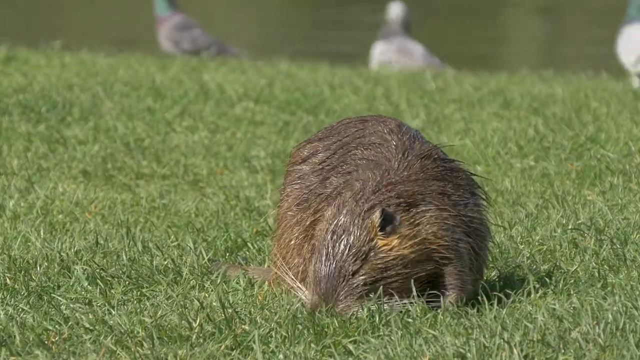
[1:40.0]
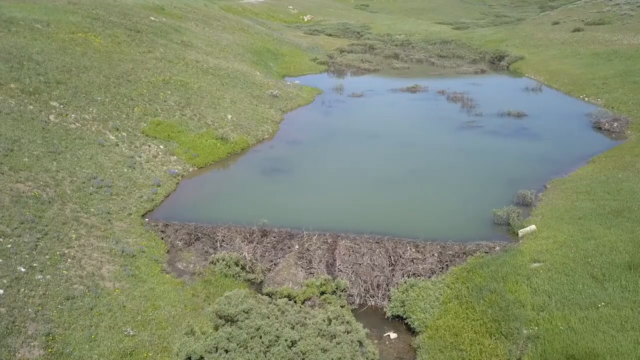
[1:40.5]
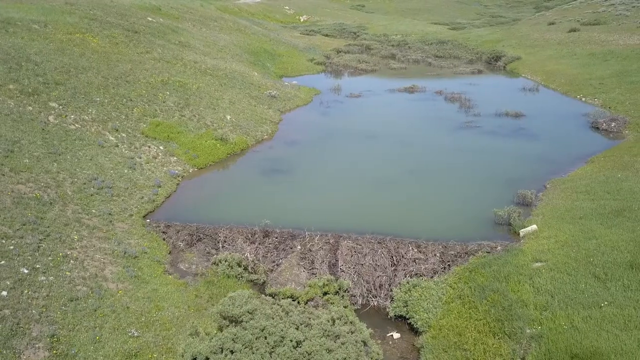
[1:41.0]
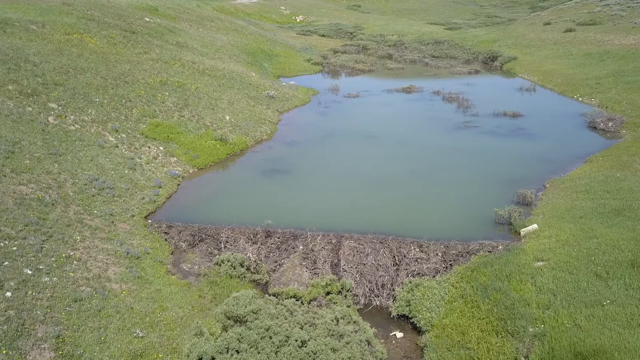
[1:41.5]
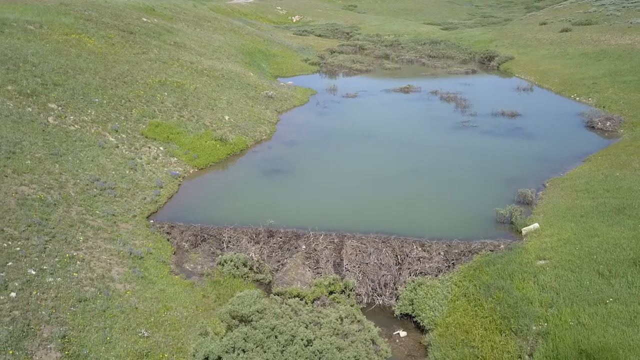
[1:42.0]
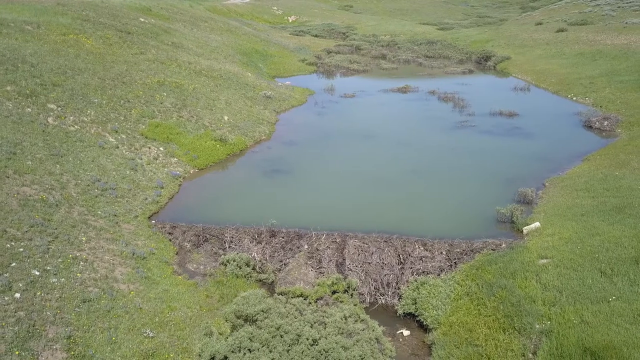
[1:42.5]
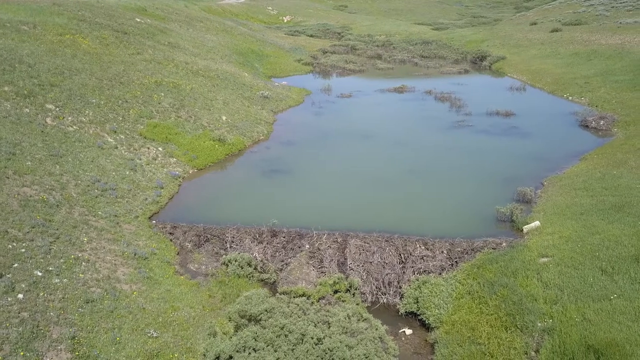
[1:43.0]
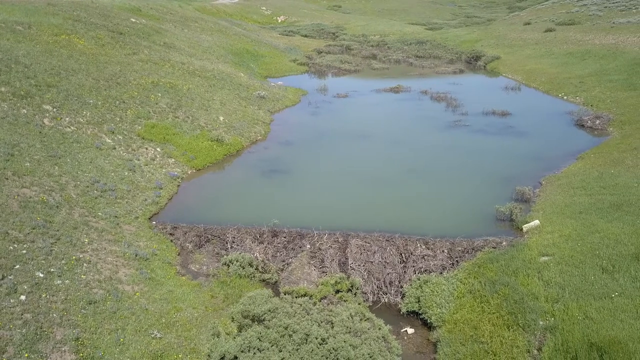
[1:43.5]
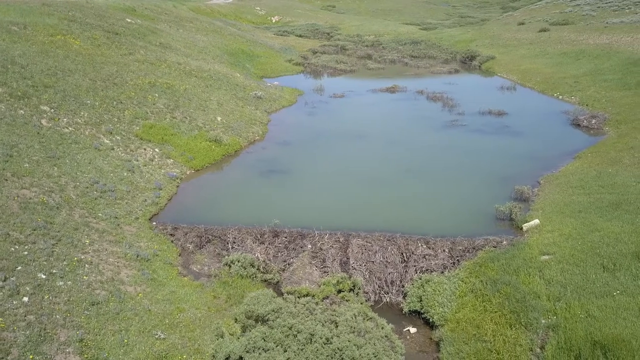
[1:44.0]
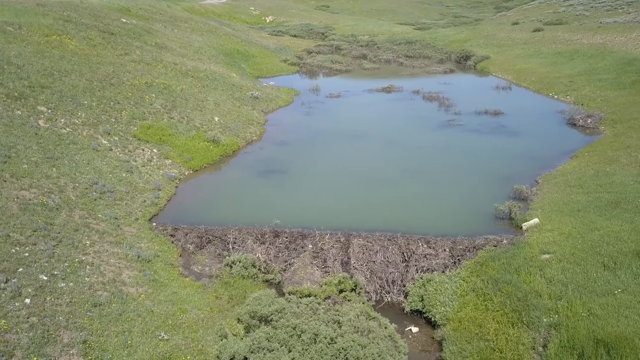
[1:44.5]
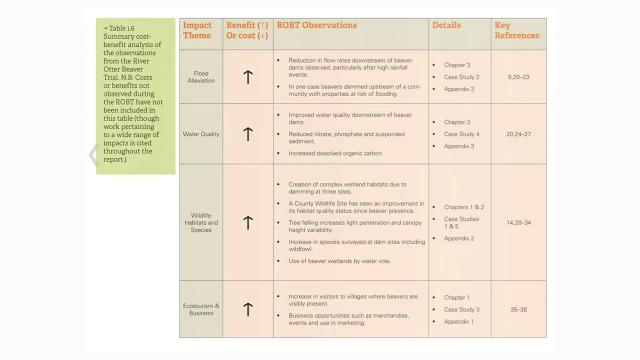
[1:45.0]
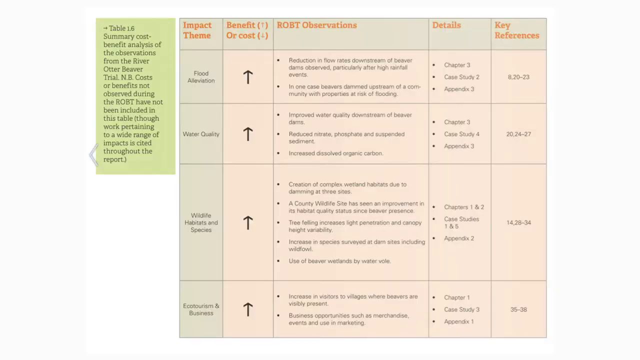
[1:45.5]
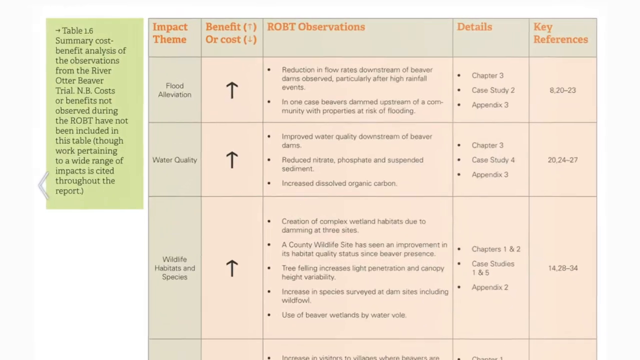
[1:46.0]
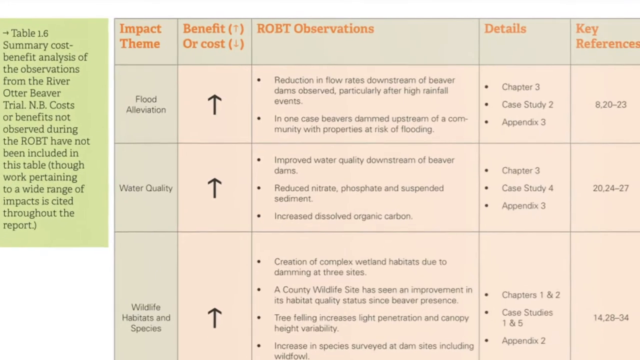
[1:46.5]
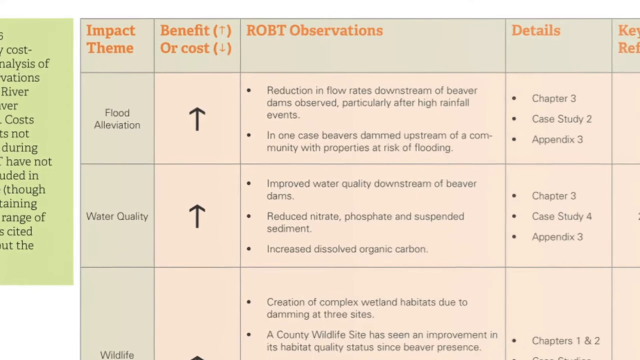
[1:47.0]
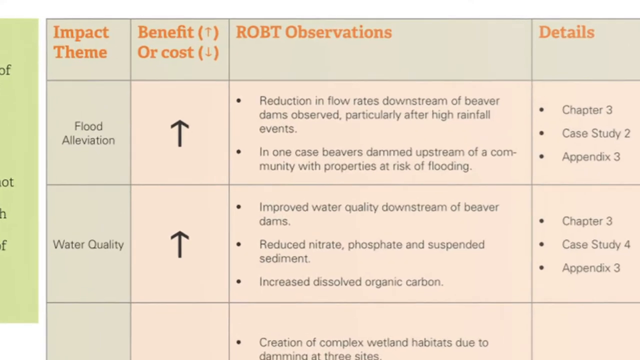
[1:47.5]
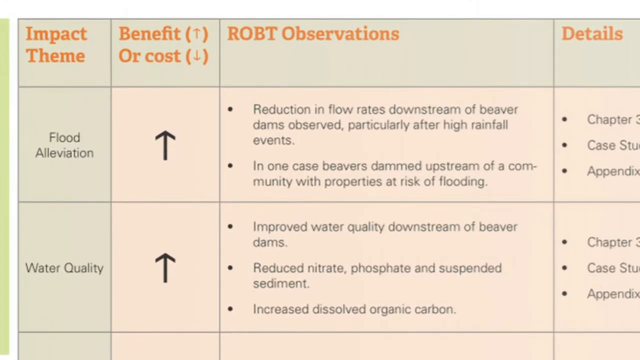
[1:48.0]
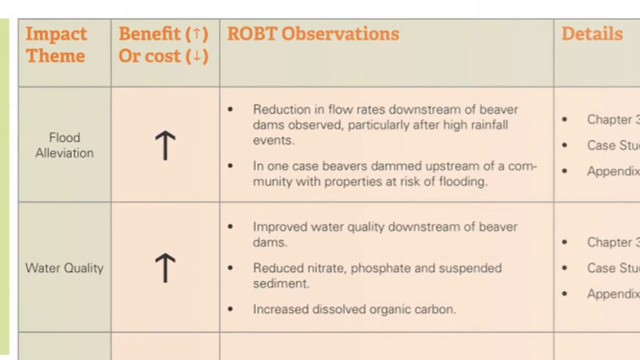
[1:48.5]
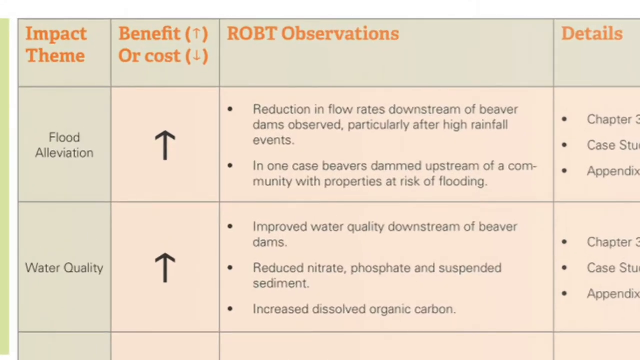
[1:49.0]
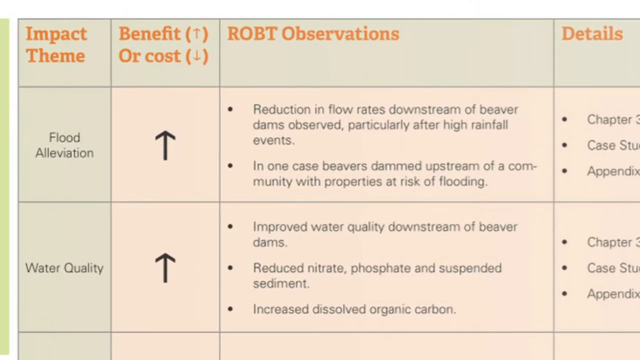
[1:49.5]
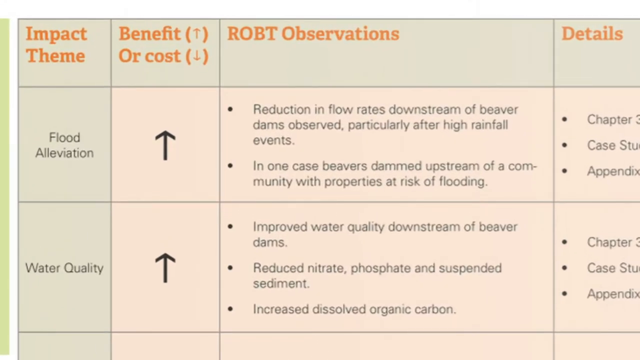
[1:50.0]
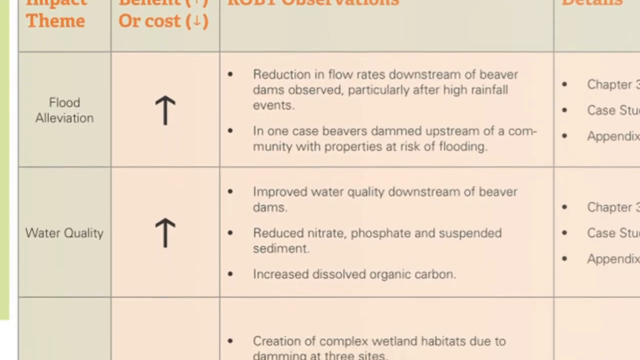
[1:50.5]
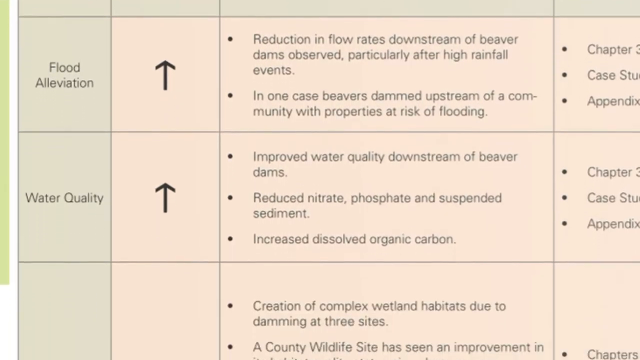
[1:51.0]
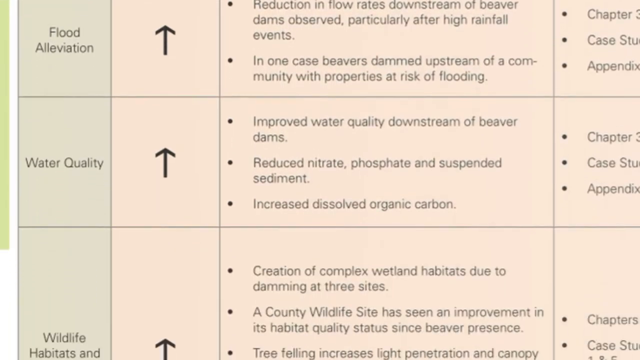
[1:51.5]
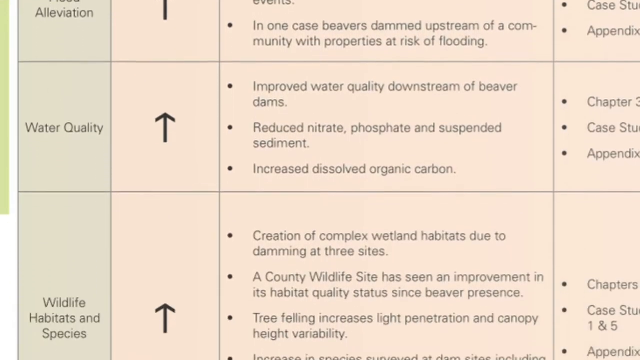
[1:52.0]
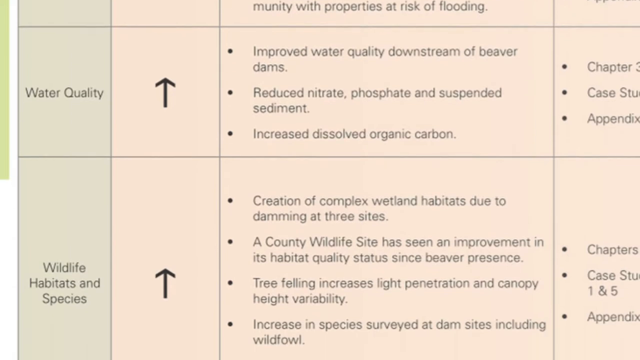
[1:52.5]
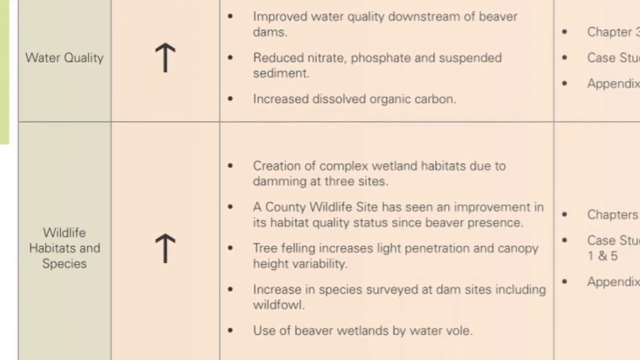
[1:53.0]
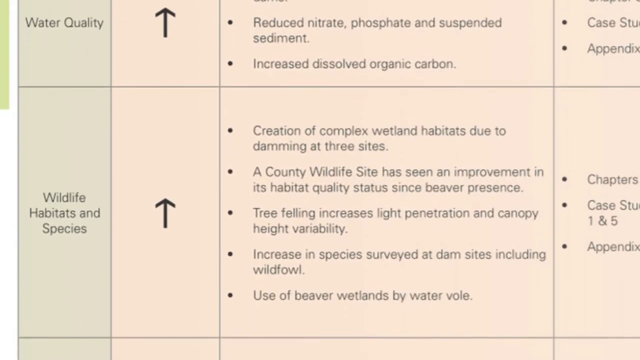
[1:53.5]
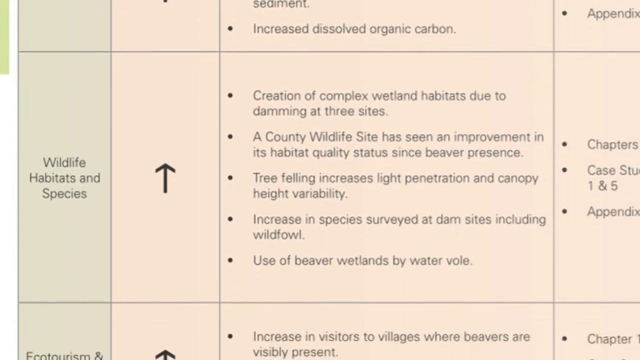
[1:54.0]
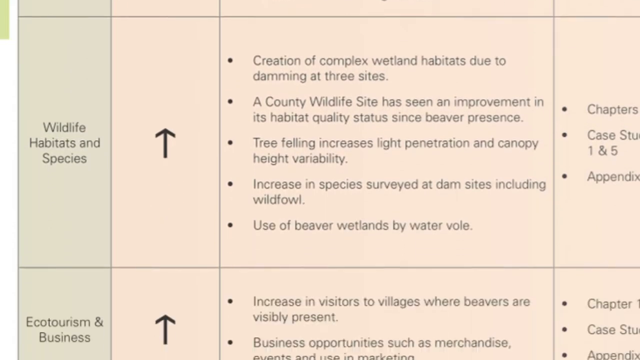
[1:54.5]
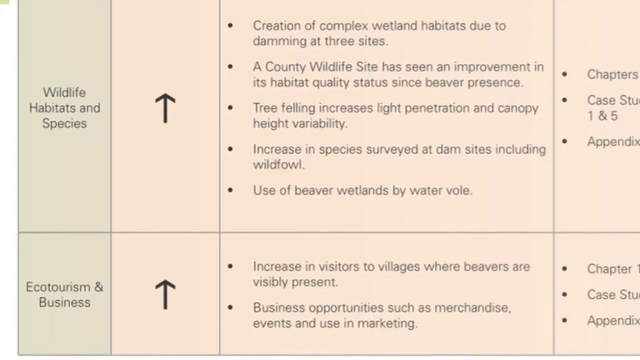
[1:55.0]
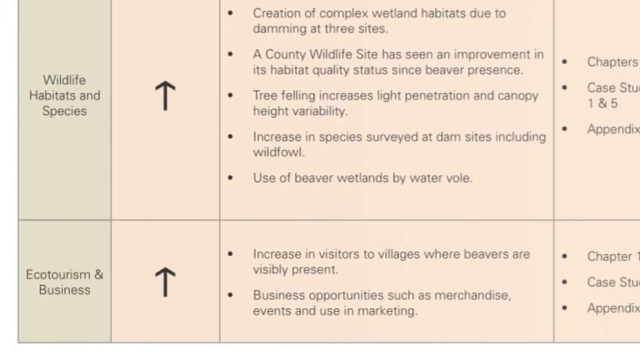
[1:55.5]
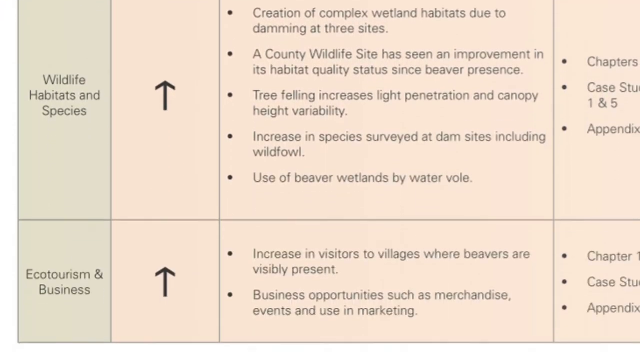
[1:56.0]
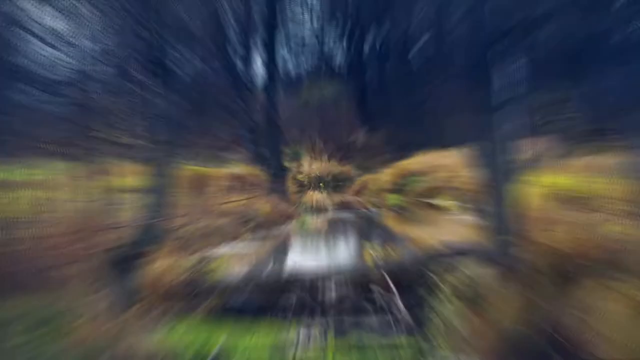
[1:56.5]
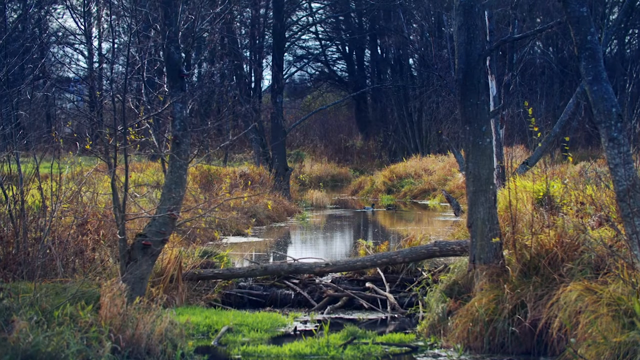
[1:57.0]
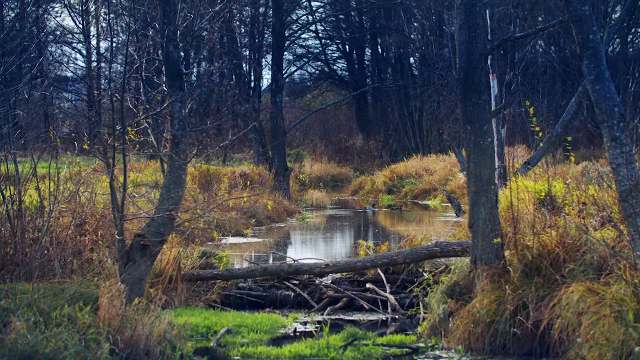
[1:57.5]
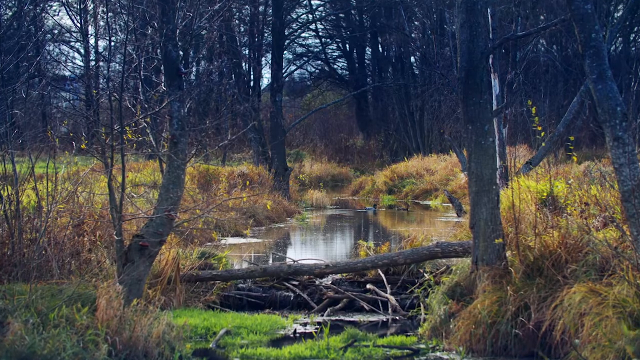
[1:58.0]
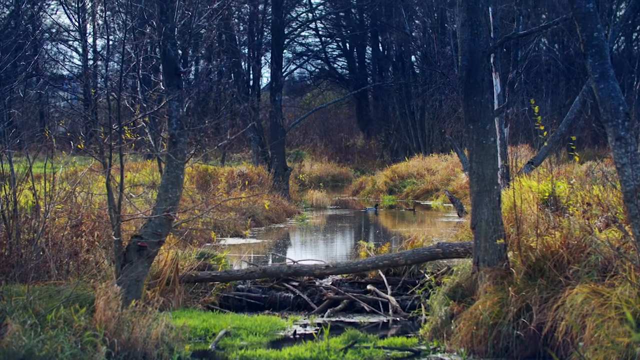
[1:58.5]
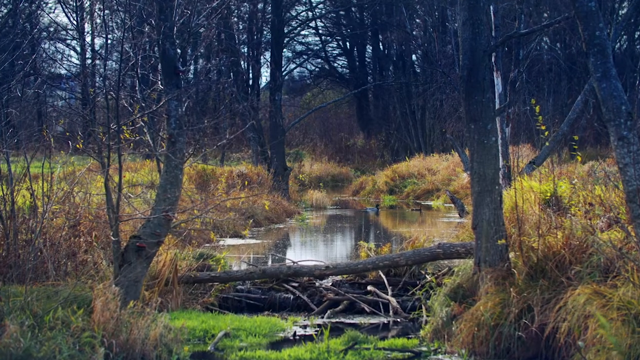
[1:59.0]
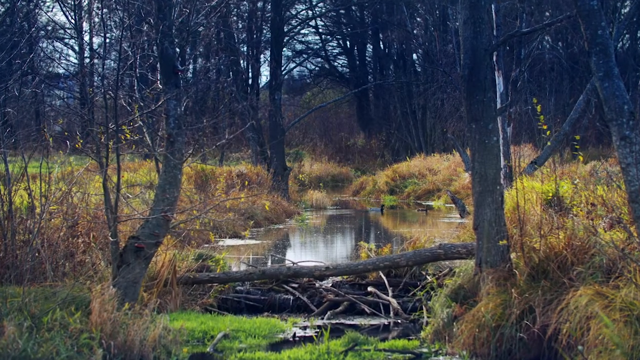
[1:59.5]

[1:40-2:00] The short green grassy banks of a river are shown, with three pigeons in the far background near the water's edge and a large beaver resting in a grassy area in the foreground. The video then transitions to what appears to be a dam that has created a large pond and a valley surrounded on all sides by green grass. Next is a chart colored green, orange, and beige, with words mostly in black, headlines in orange, and black arrows pointing upward. The video zooms in on "Table 1.6 Summary Cost, Benefit Analysis of the Observations from the River Otter Beaver Trial", with a note that costs or benefits not observed during the ROVT have not been included in the table, though work on a wide range of impacts is cited throughout the report. The impact themes include flood alleviation, water quality, wildlife, habitats, and species, and benefits have arisen in each category. The observations listed include a reduction in flow rates downstream of beaver dams, particularly after high rainfall events; a case where beavers dammed upstream of a community with properties at risk of flooding, with details in Chapter 3; improved water quality downstream of beaver dams, with reduced nitrate, phosphate, and suspended sediment and increased dissolved organic carbon; the creation of complex wetland habitats due to damming at three sites; a county wildlife site that has improved its habitat quality status; an increase in species surveyed at dam sites, including wildfowl; use of beaver wetlands by water voles; and an increase in visitors to villages where beavers are present, along with business opportunities such as merchandise, events, and marketing. The video then transitions to an image of a wooded area showing a beaver dam that has dammed up a creek.